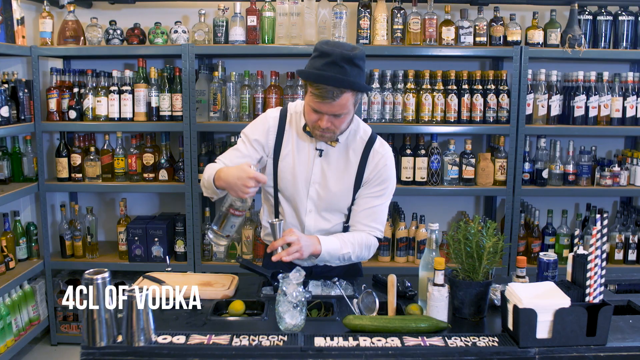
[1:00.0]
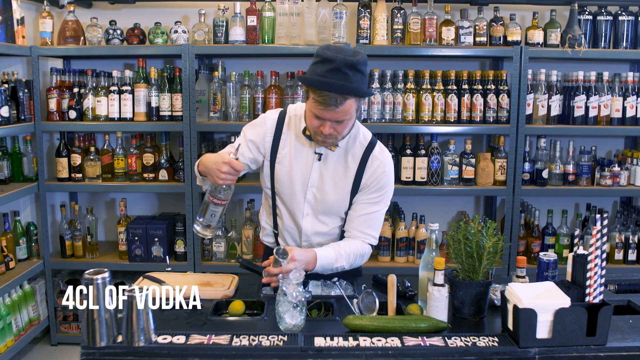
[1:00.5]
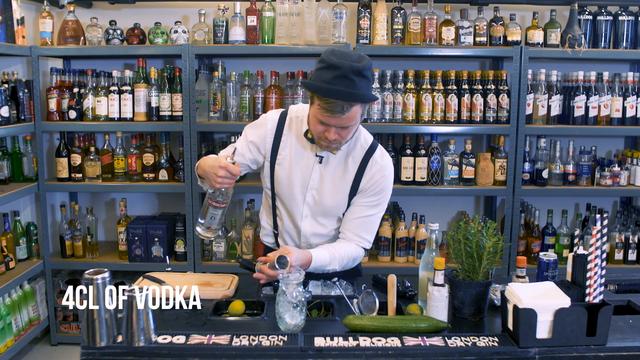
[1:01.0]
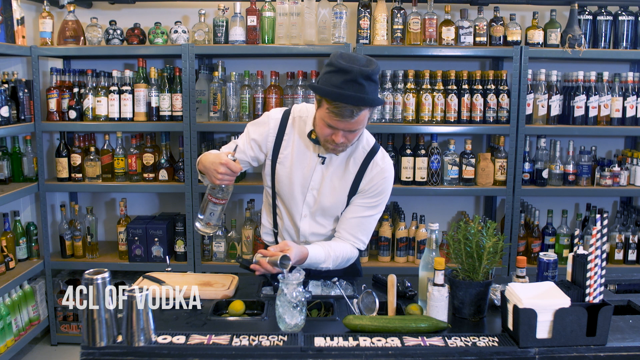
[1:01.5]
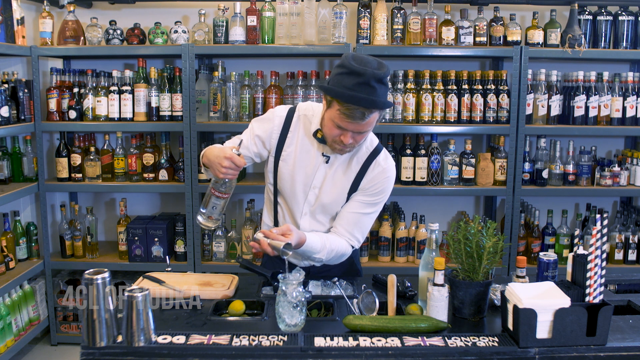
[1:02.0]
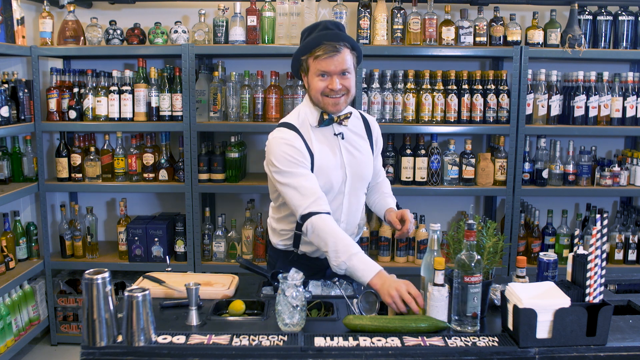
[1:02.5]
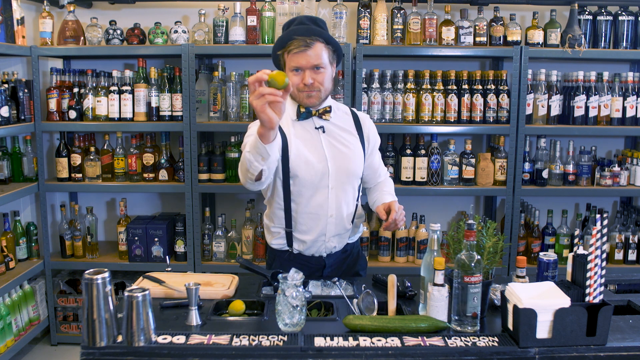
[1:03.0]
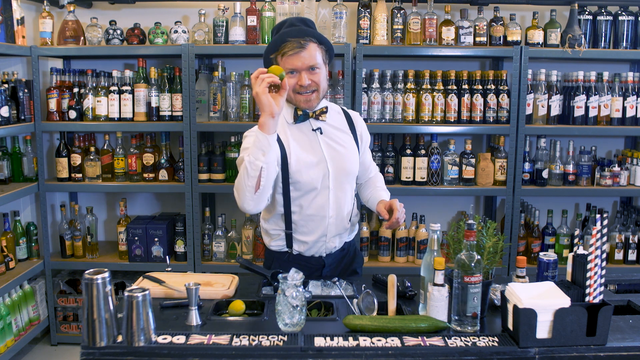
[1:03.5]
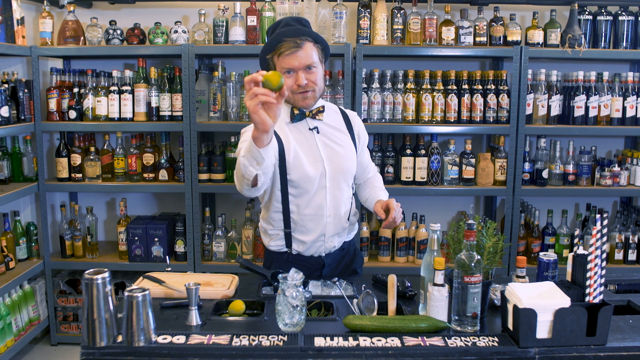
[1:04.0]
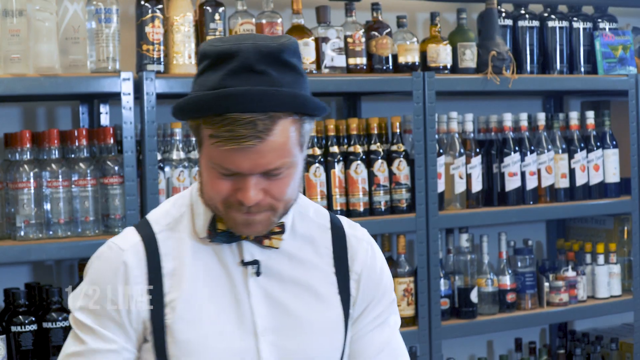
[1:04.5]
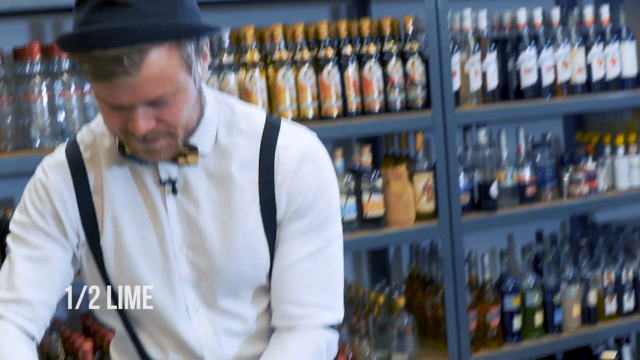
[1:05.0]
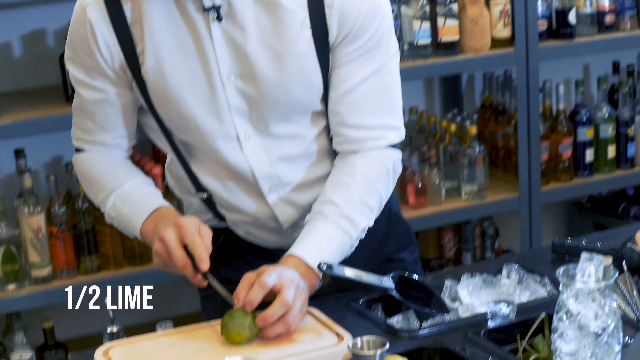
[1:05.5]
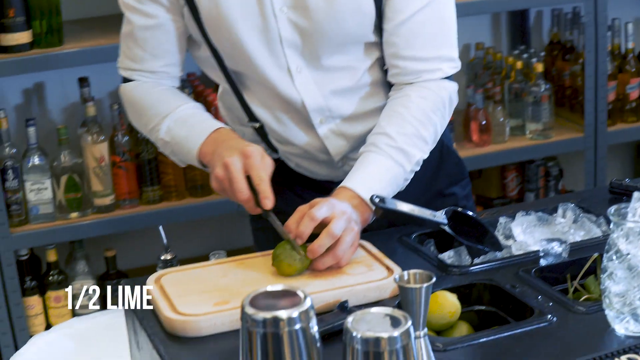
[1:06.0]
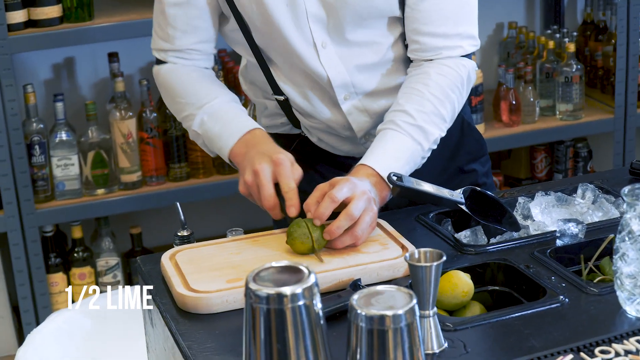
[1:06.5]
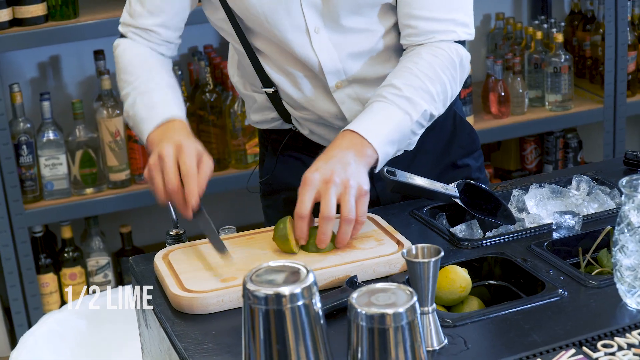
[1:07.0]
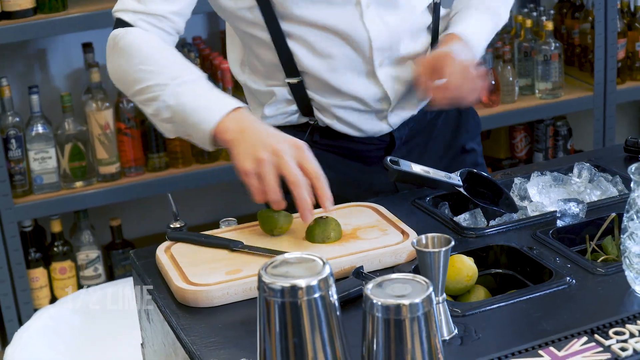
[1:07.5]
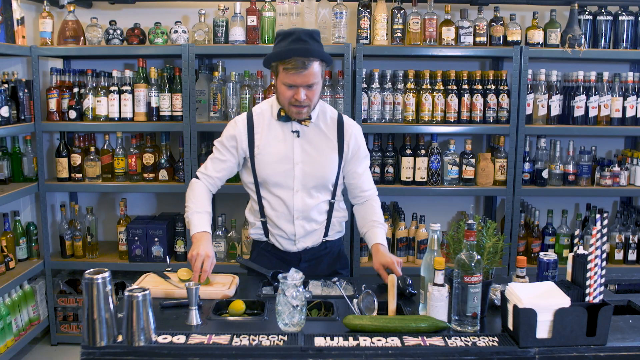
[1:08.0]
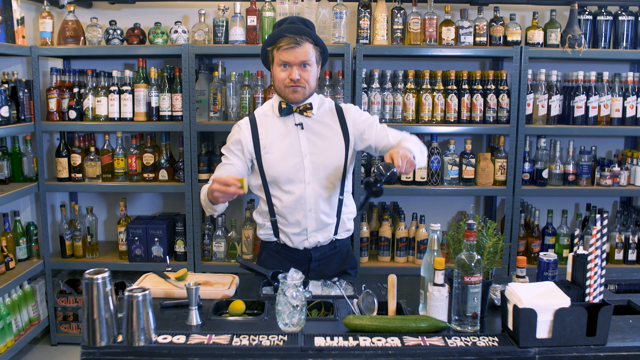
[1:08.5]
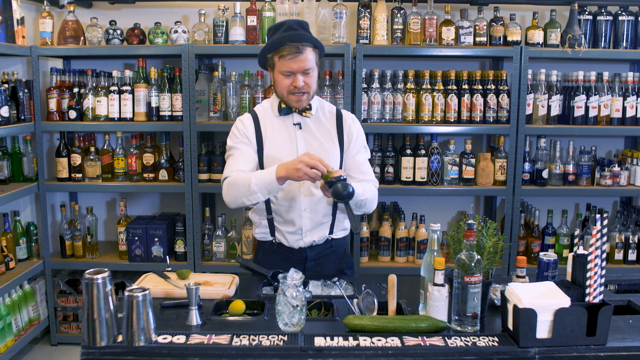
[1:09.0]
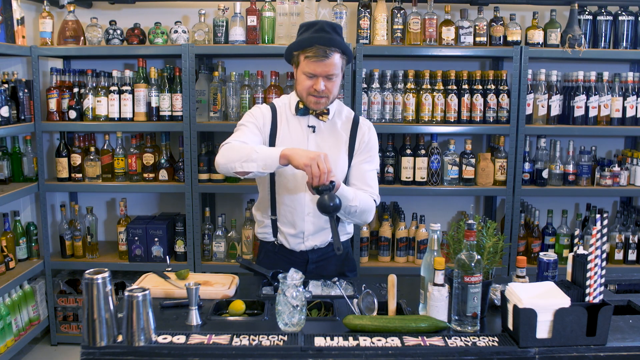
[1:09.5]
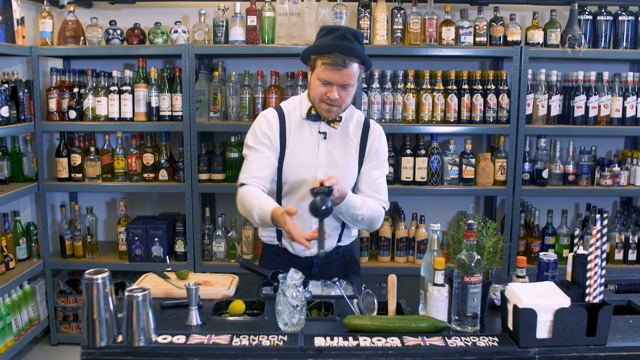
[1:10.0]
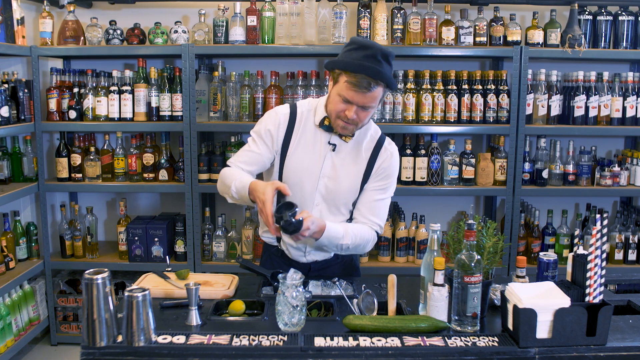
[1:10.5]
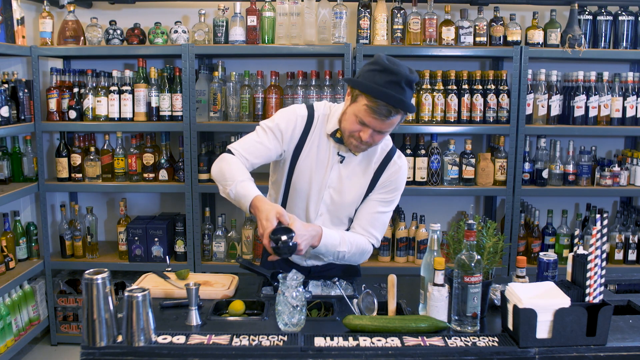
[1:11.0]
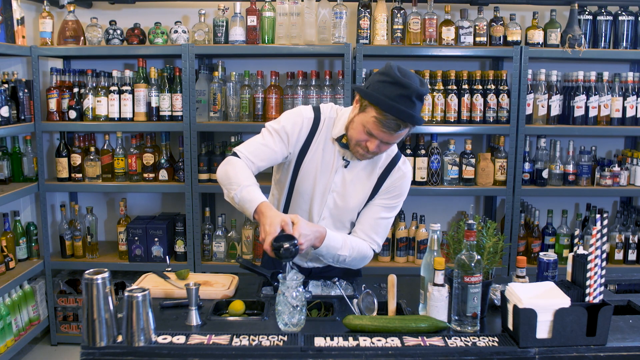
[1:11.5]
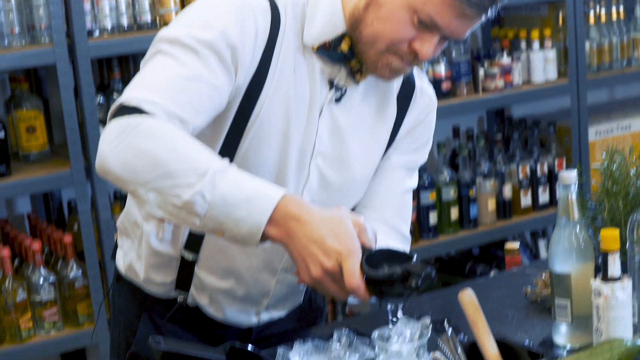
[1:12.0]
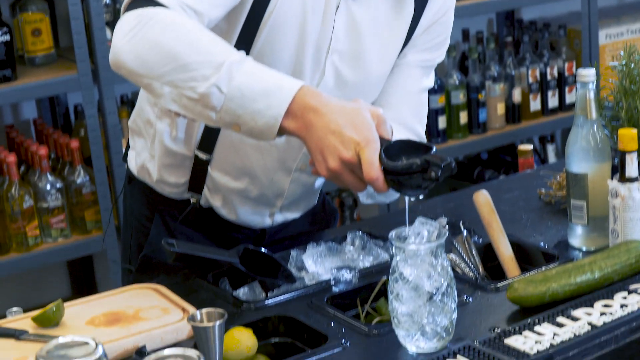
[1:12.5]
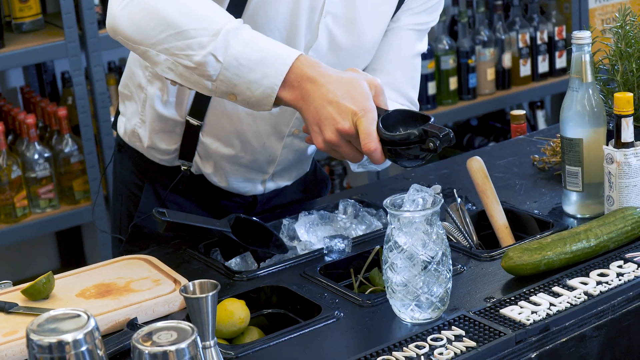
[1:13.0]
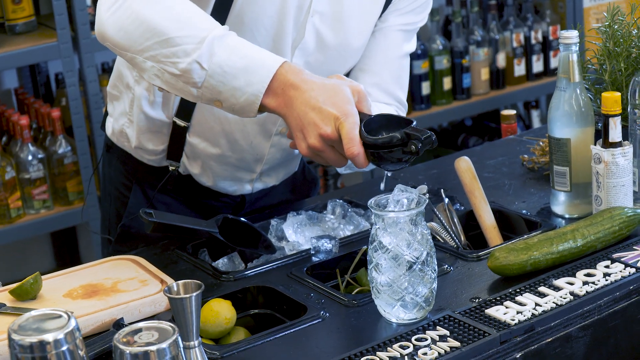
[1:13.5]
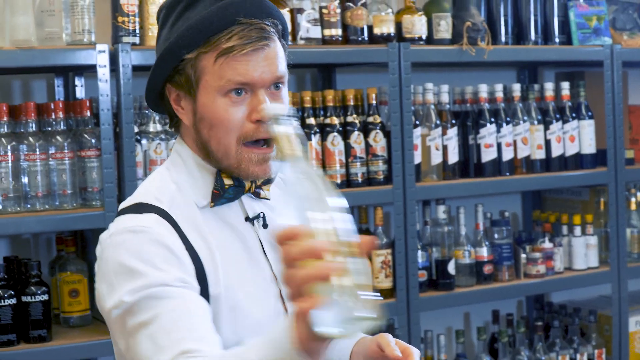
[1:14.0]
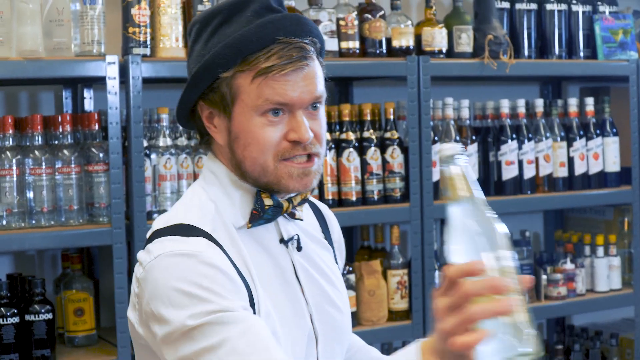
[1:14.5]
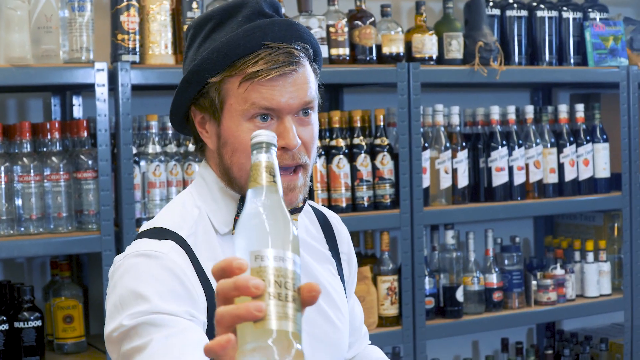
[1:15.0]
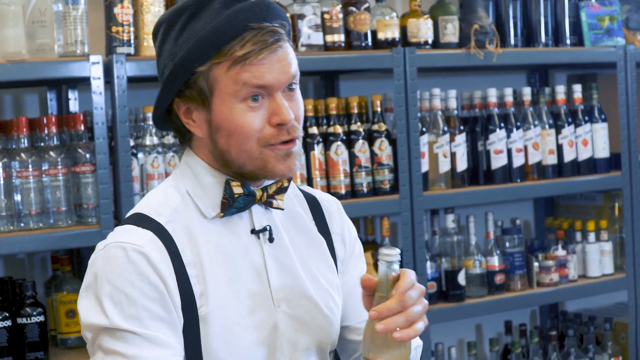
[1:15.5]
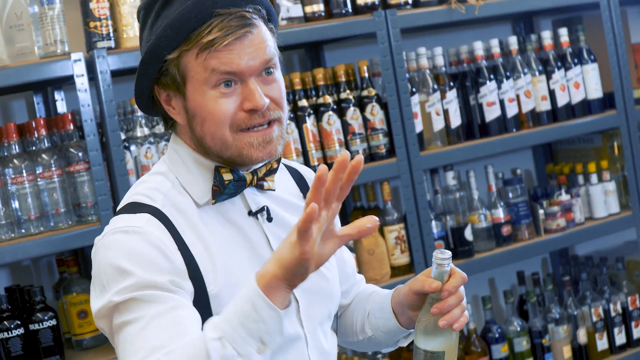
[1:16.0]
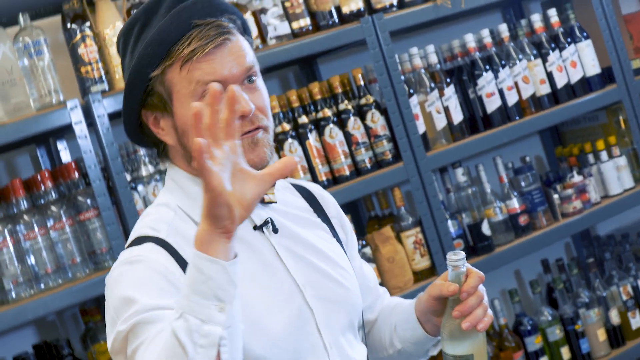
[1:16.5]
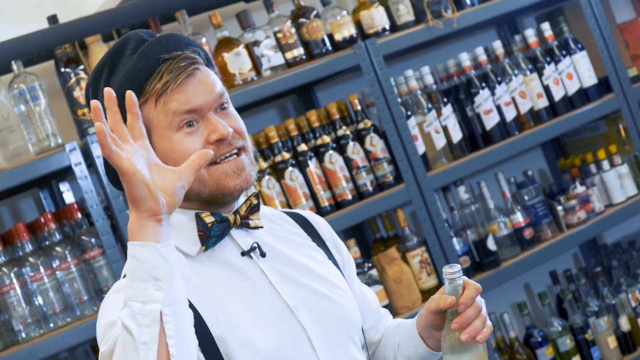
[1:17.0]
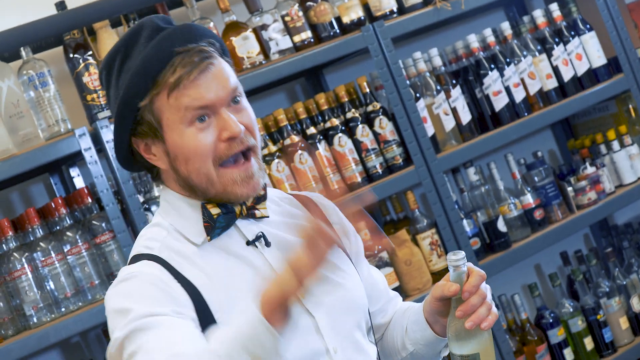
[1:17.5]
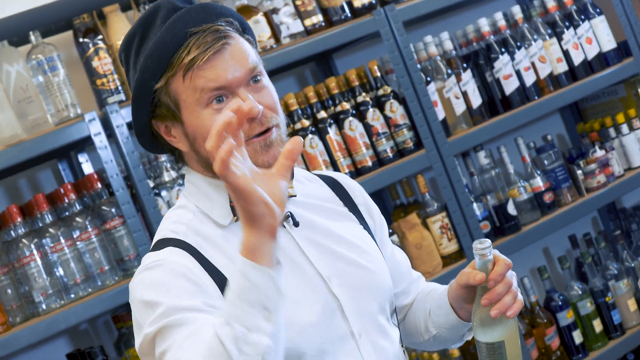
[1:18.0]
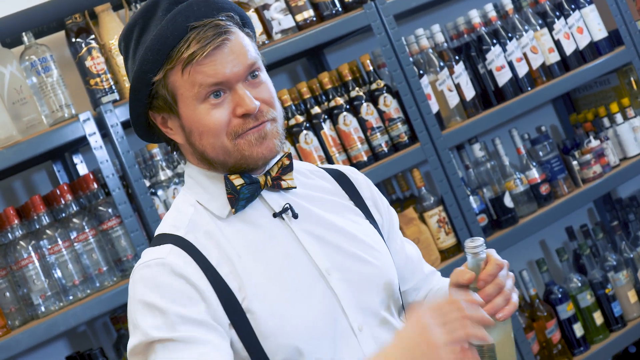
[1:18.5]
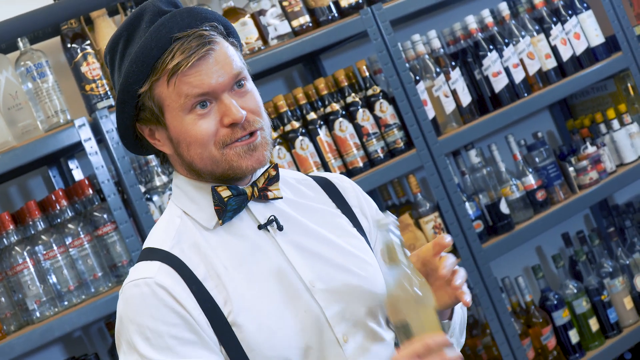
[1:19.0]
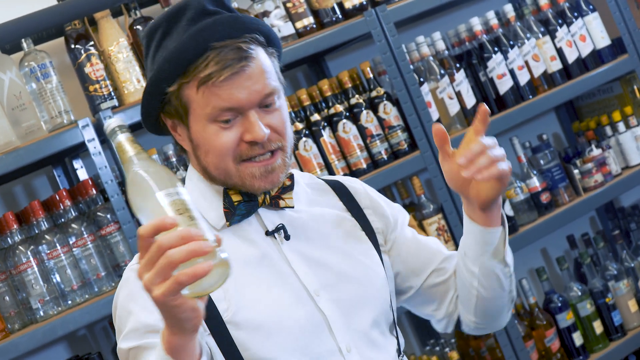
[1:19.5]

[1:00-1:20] Rasmus pours the vodka into the pineapple glass cup. He grabs a full lime, intending to use half of it, places it on a chopping board, and with a knife in one hand and the lime pressed down on the board, slices it in half. He takes one half and, with a black squeezer, squeezes the juice into the pineapple-shaped glass cup. He then sways the ginger beer around as his lips and hands move. On the table are various shakers, a black open box full of serviettes, and next to it straws wrapped in white and blue and in white and red. The remaining lime is still on the chopping board alongside the knife, which has a black handle.